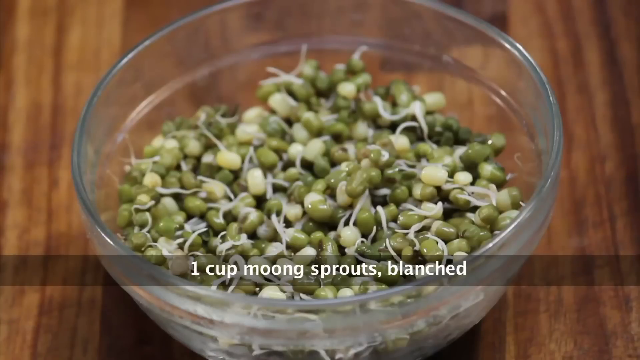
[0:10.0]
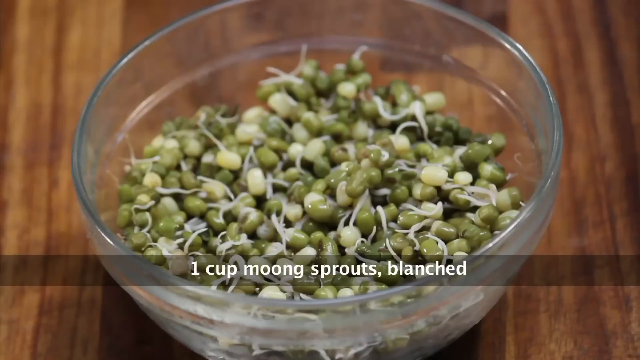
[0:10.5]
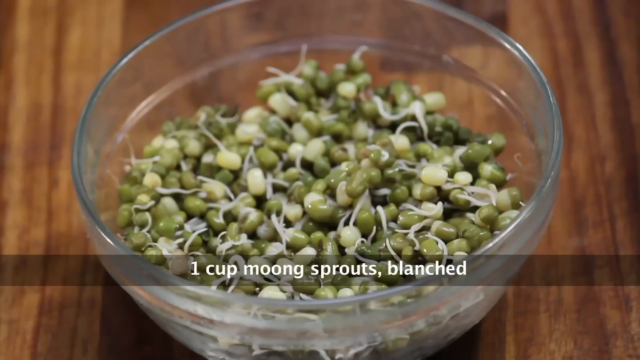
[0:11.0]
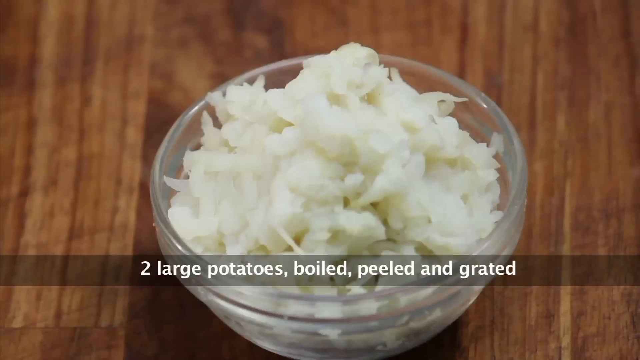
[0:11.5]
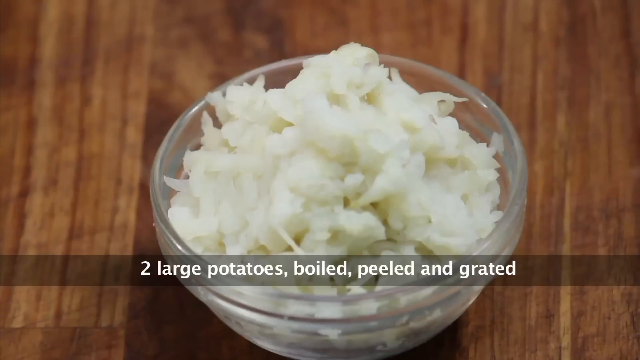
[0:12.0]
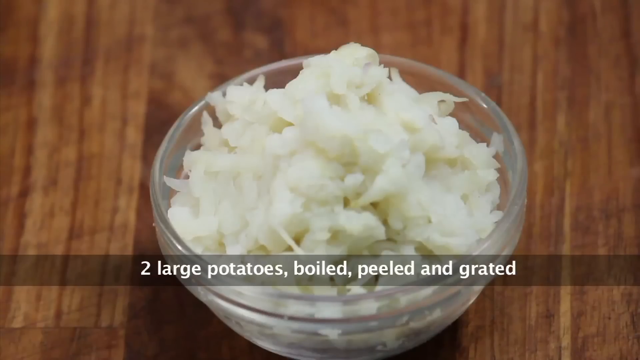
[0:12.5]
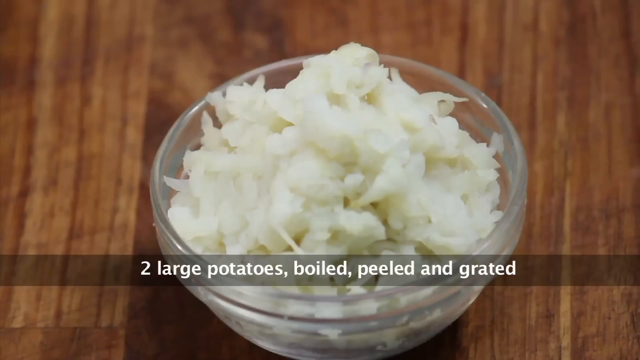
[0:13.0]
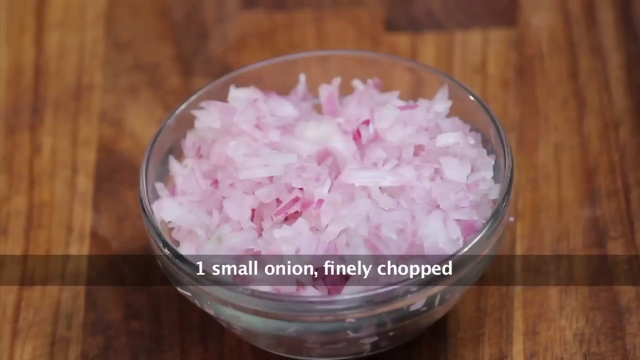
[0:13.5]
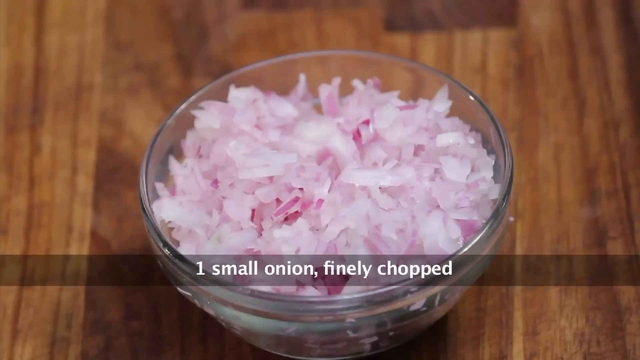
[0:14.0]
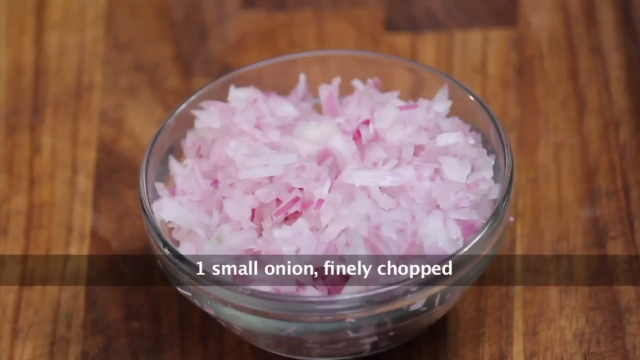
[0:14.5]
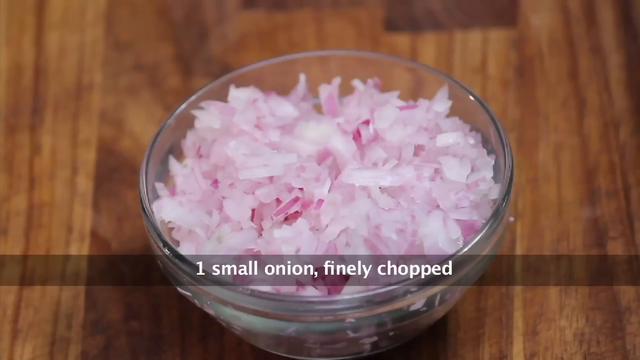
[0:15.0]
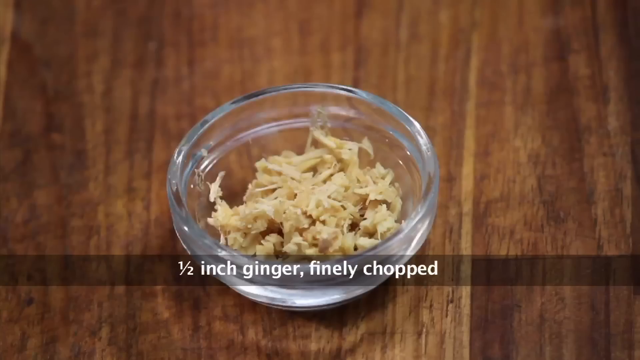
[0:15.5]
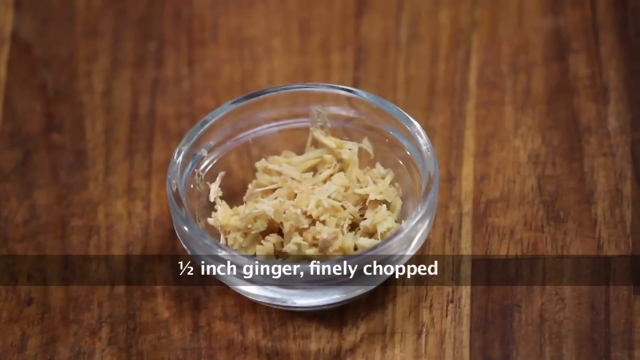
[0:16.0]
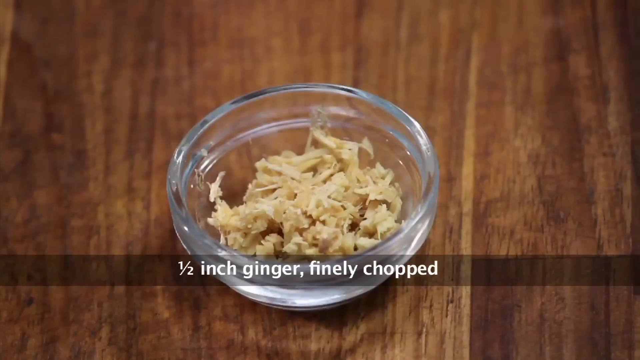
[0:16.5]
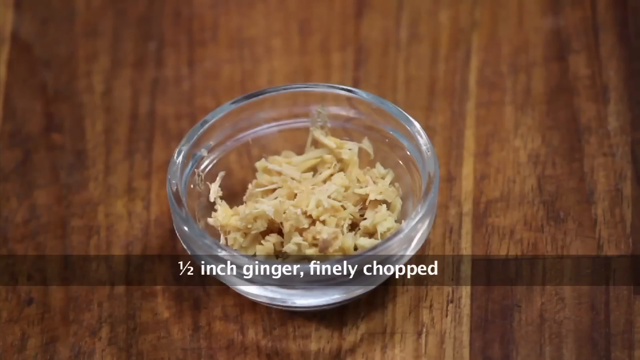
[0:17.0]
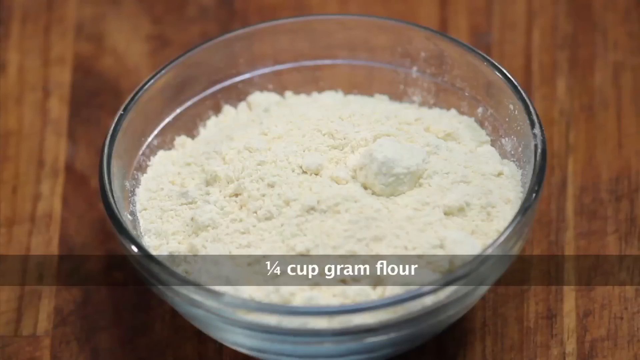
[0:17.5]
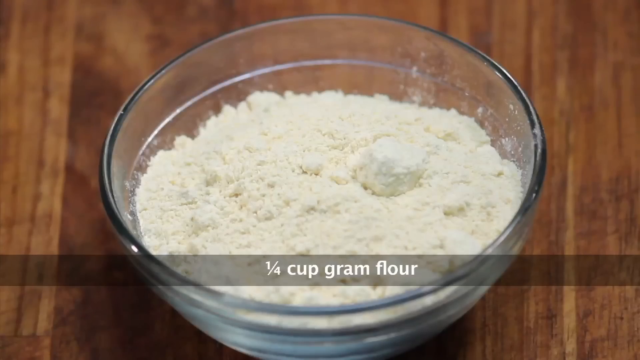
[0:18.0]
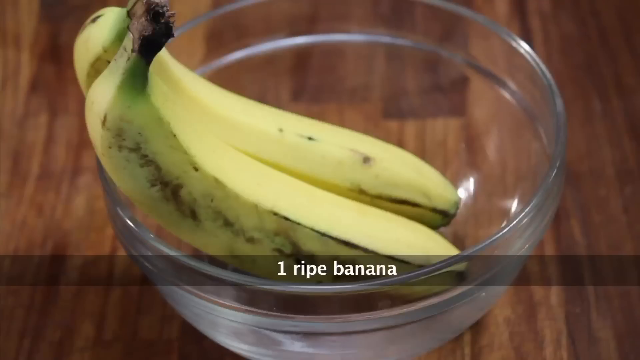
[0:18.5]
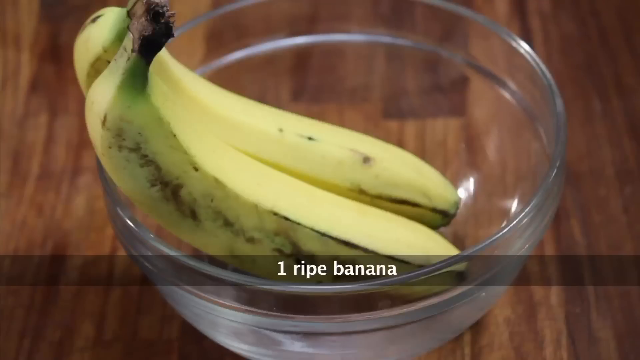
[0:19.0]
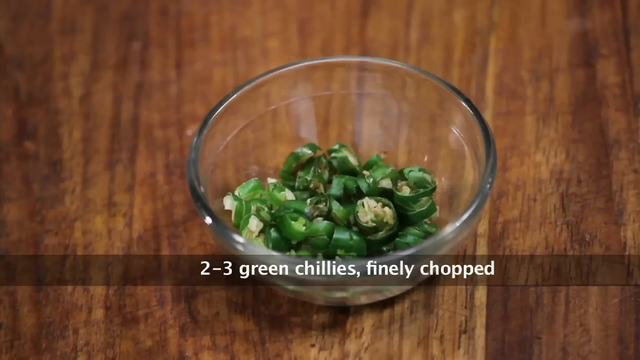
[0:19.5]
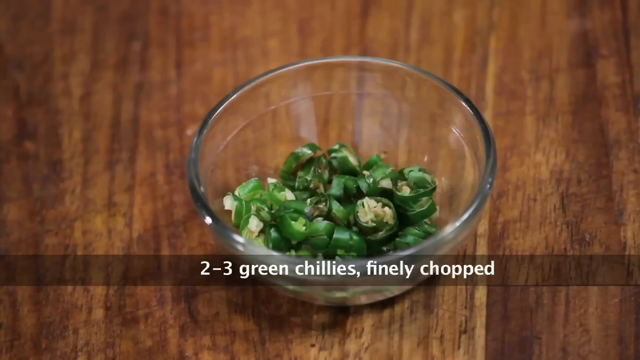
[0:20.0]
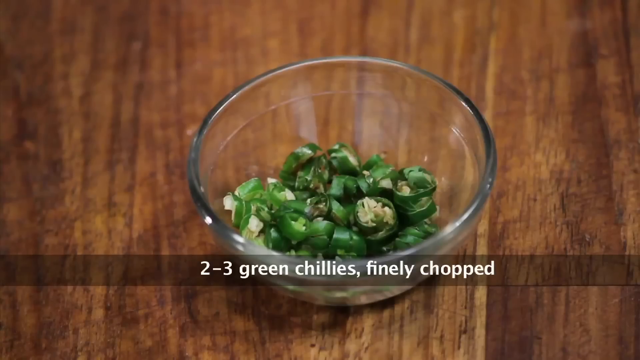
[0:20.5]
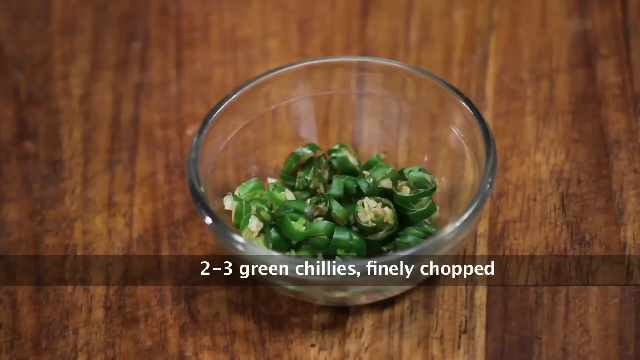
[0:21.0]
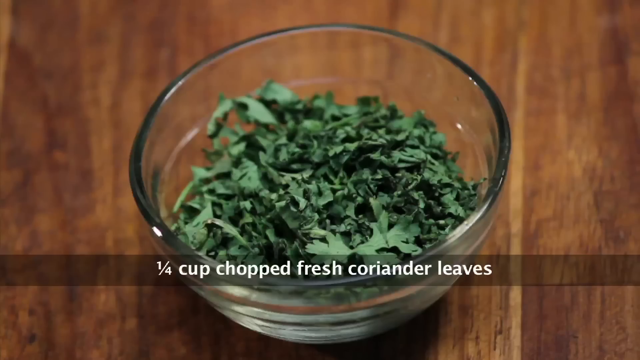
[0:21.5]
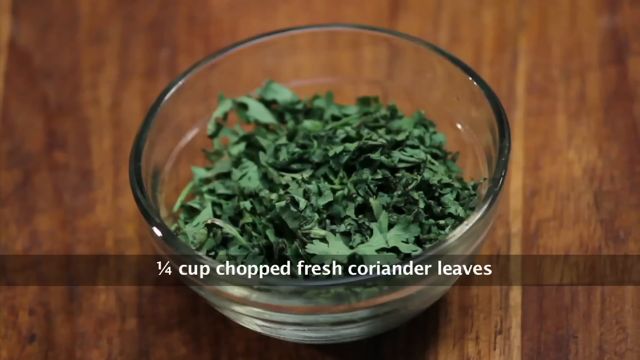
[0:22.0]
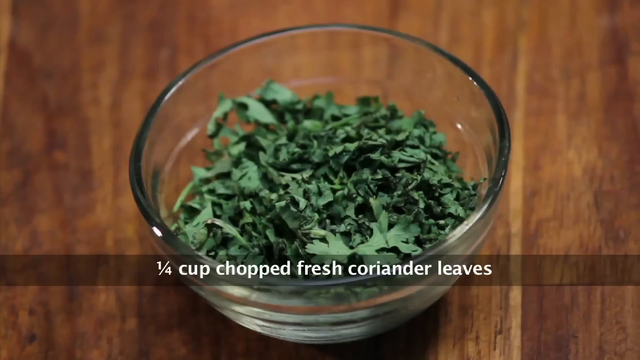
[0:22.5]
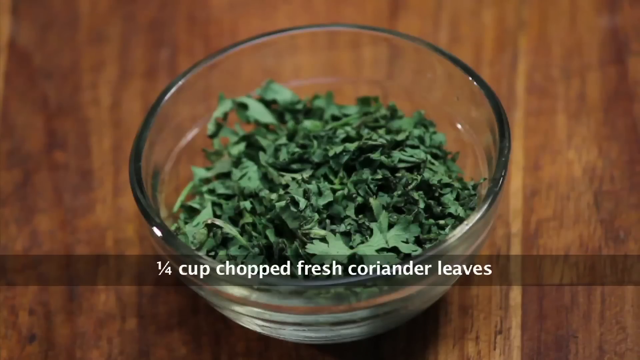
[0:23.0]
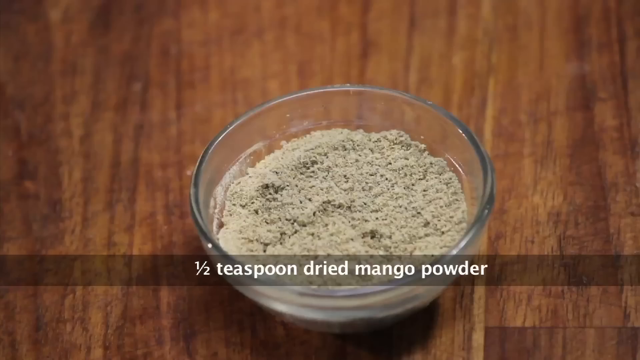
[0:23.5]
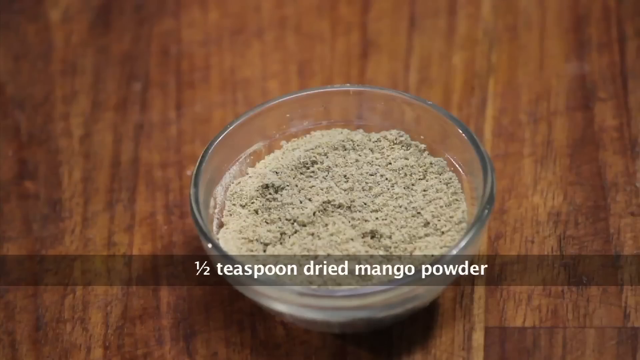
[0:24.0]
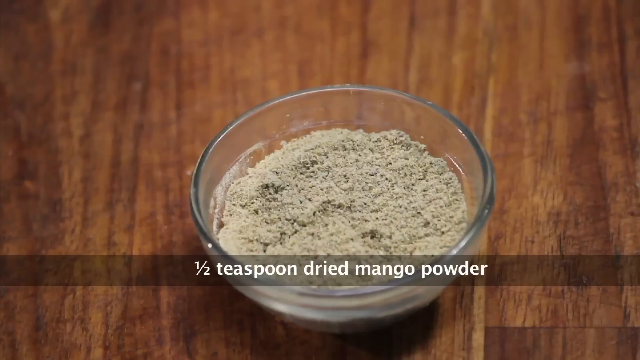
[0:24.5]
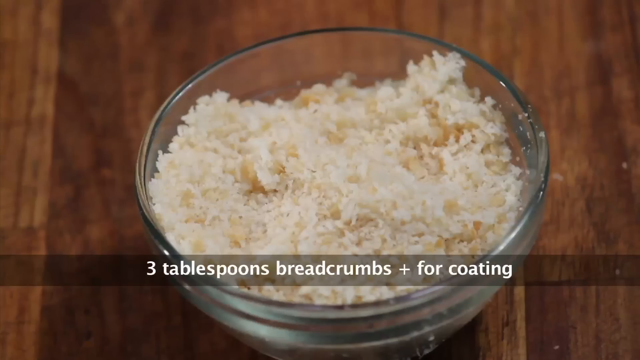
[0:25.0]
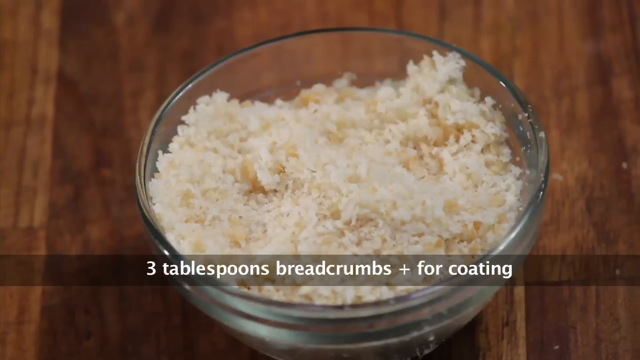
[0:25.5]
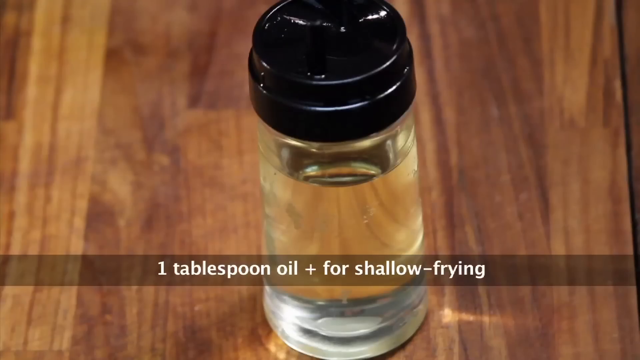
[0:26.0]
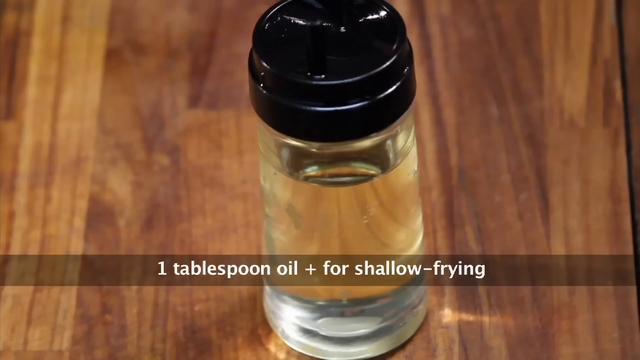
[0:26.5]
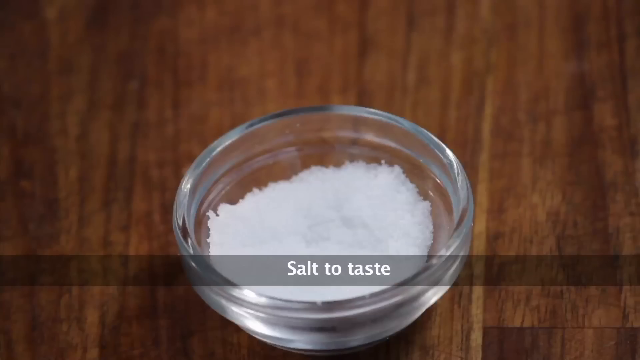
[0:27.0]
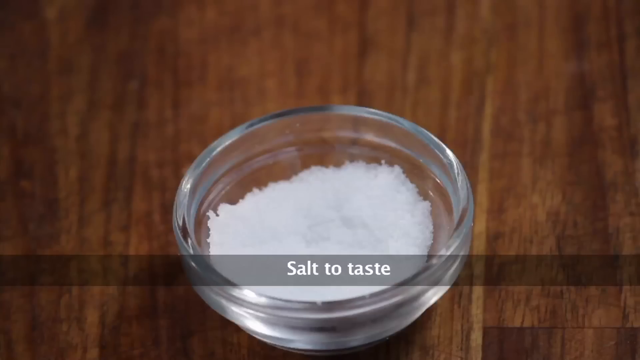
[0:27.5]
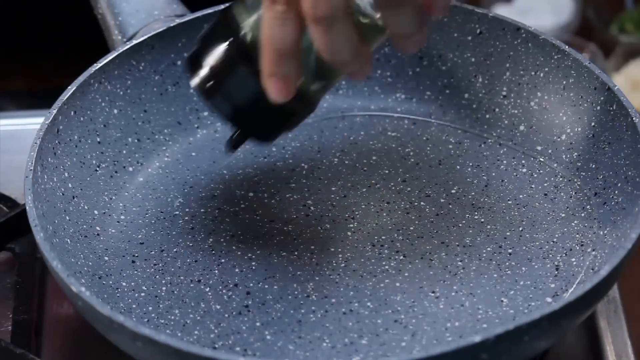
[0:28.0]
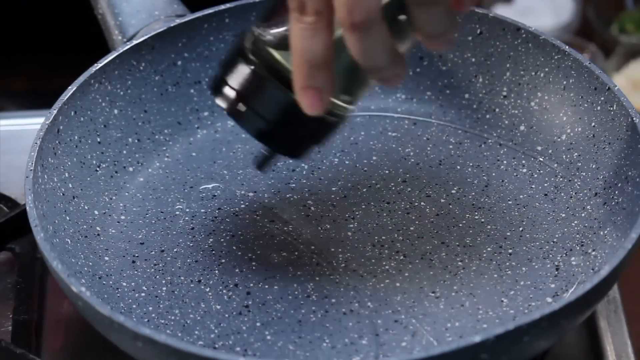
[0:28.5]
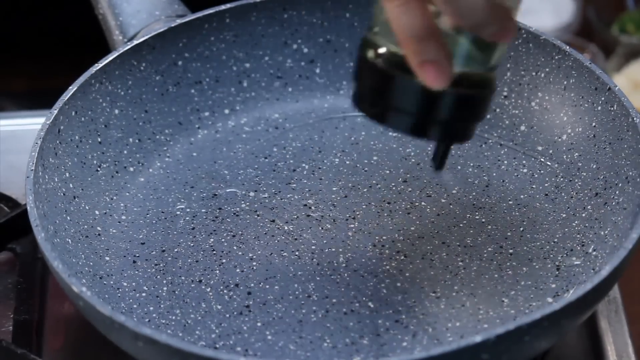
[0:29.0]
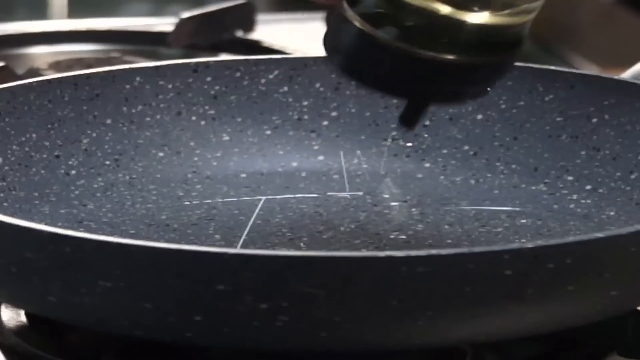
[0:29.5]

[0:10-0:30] Two onions are shown in a glass bowl on top of a brown kitchen table or counter. Next comes one small onion, finely chopped, in a glass bowl, pink. Half an inch of finely chopped ginger is in a glass bowl. Two bananas, labeled as one ripe banana, are in a glass bowl; both are still yellow with a little bit of brown on them. Two to three chopped green chilies are in a glass bowl. Half a teaspoon of dried mango and three tablespoons of breadcrumbs for coating follow, each in a separate glass bowl. A little sprayer bottle holds a tablespoon of oil for frying, and some salt is in a little glass bowl. A person, possibly a woman or a man, is then shown pouring the oil into a gray speckled frying pan, getting ready to cook.